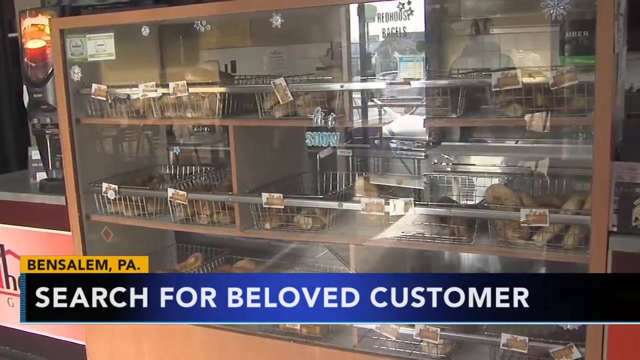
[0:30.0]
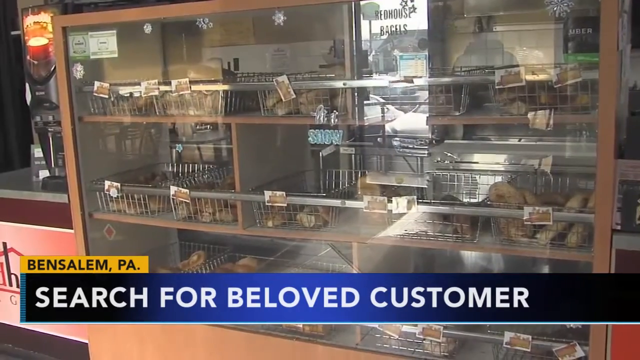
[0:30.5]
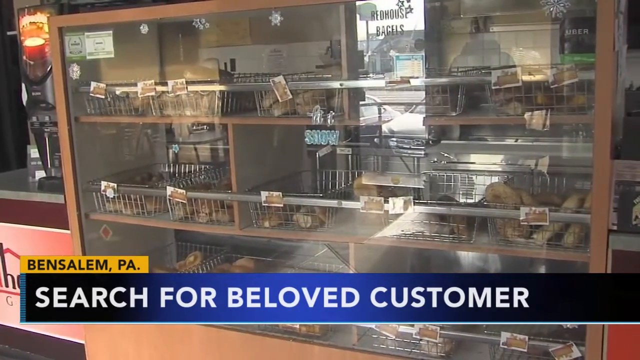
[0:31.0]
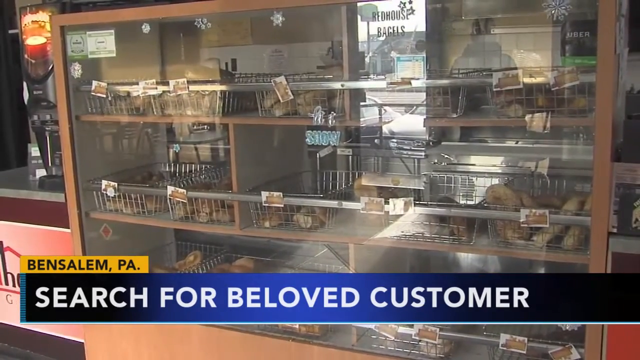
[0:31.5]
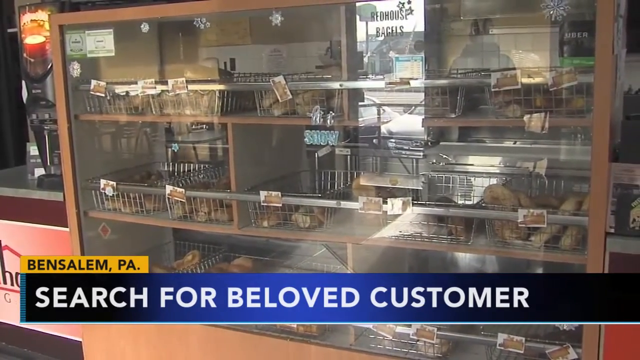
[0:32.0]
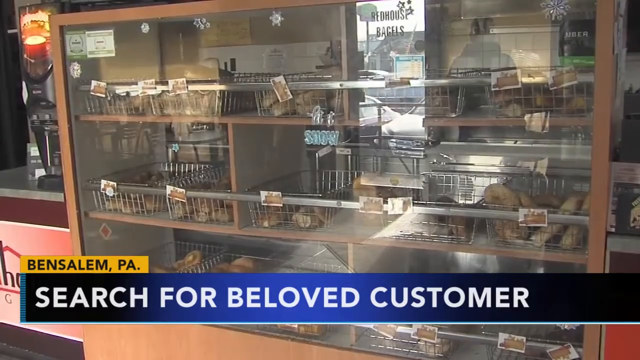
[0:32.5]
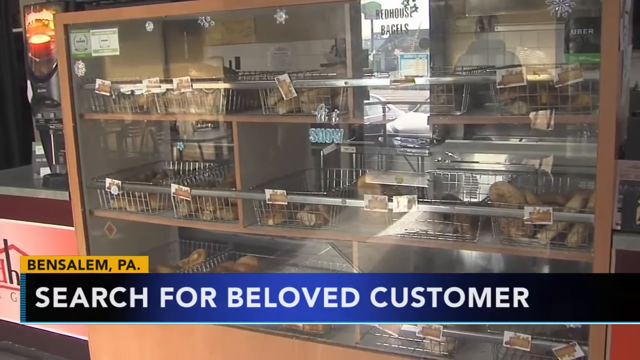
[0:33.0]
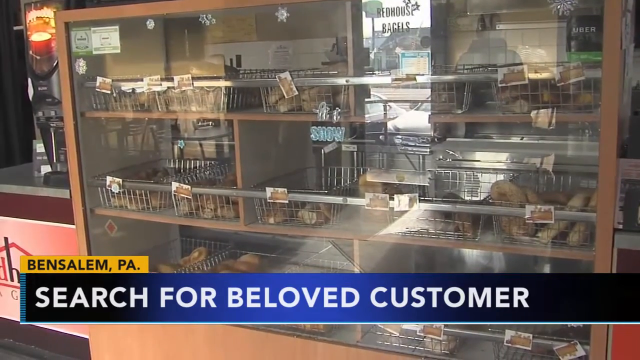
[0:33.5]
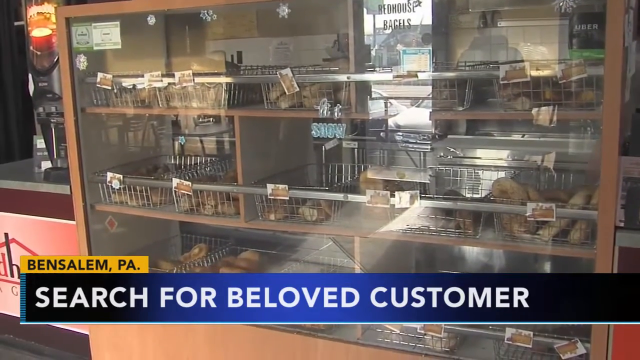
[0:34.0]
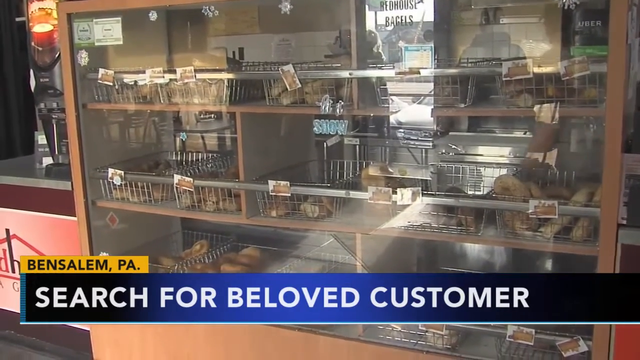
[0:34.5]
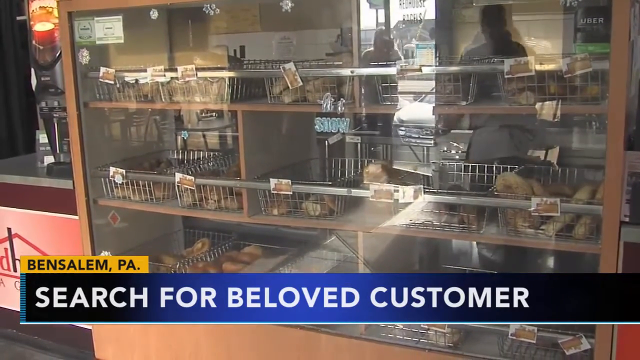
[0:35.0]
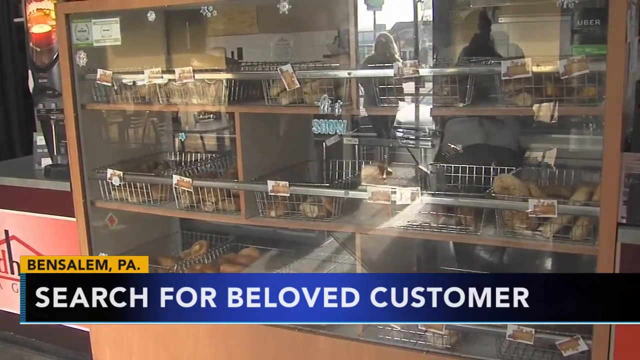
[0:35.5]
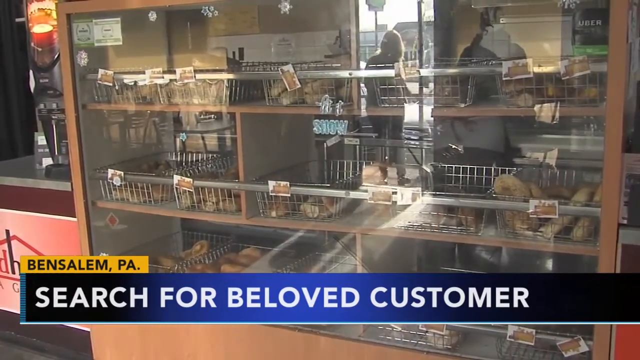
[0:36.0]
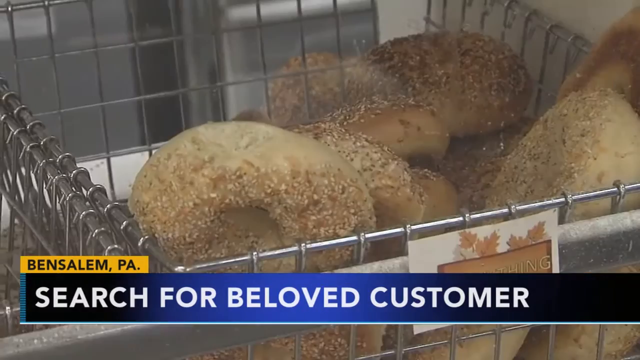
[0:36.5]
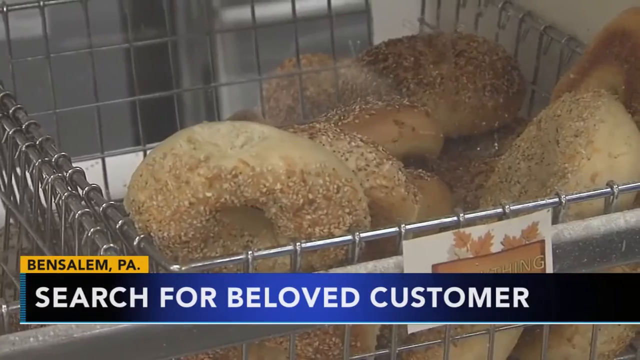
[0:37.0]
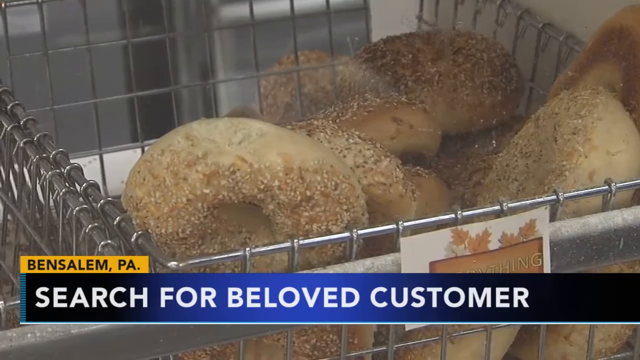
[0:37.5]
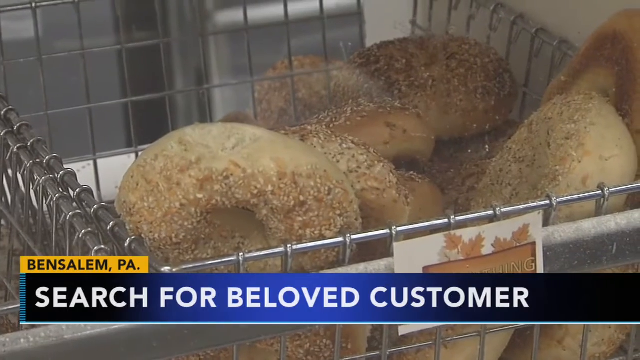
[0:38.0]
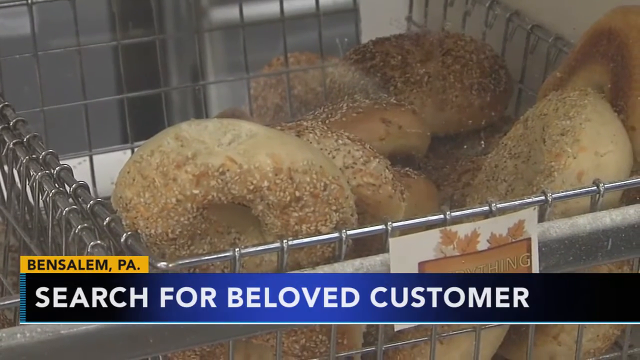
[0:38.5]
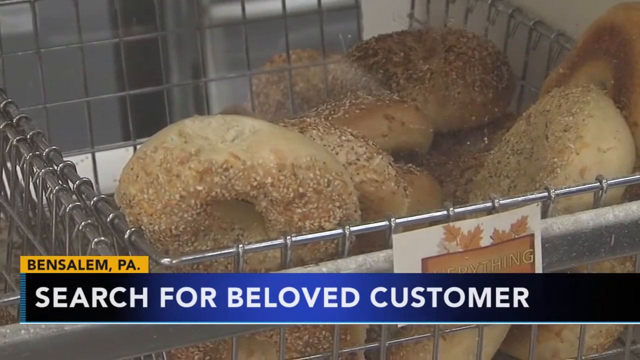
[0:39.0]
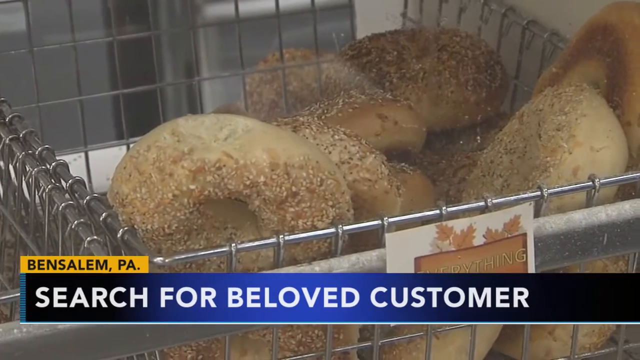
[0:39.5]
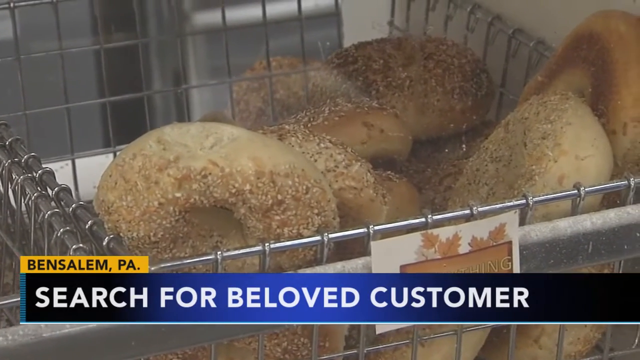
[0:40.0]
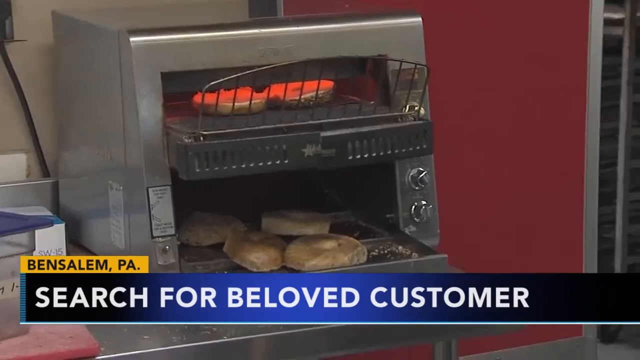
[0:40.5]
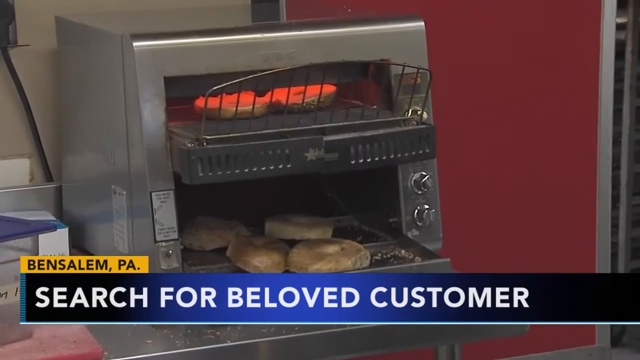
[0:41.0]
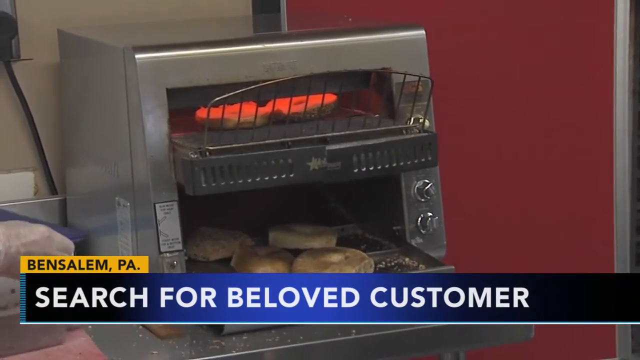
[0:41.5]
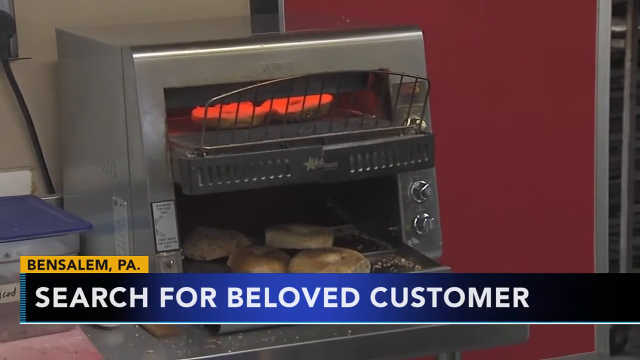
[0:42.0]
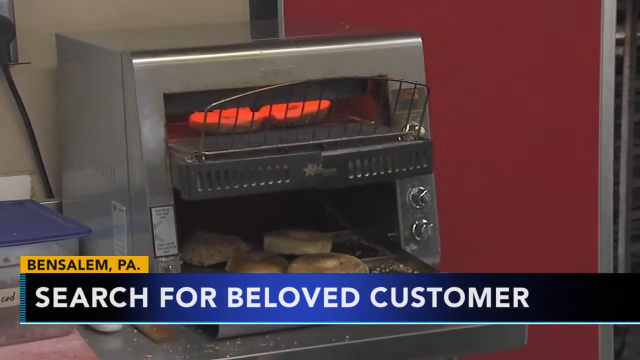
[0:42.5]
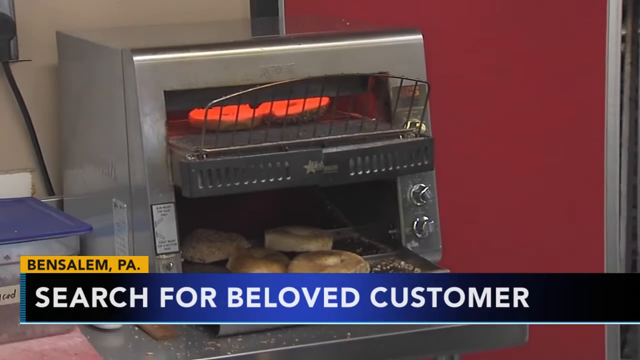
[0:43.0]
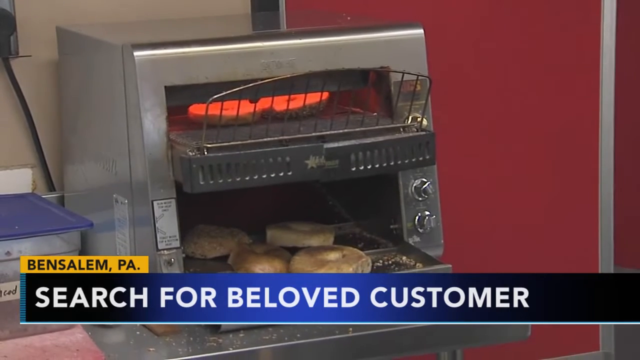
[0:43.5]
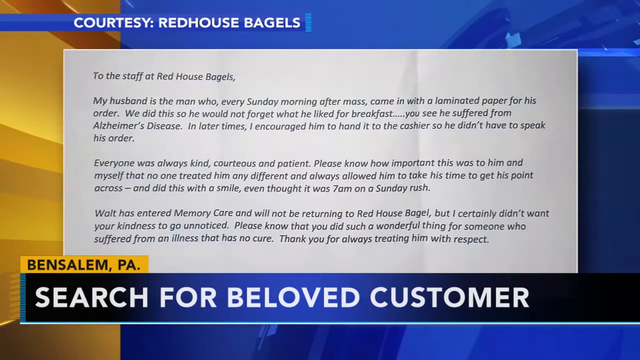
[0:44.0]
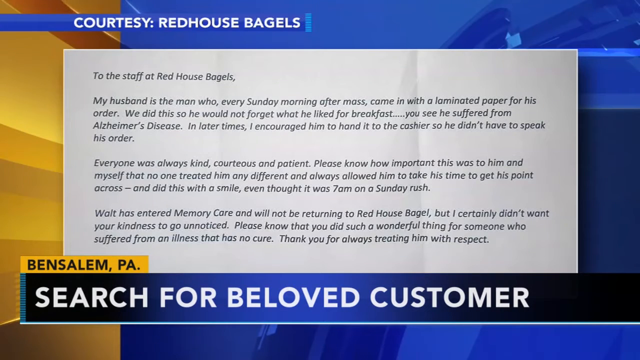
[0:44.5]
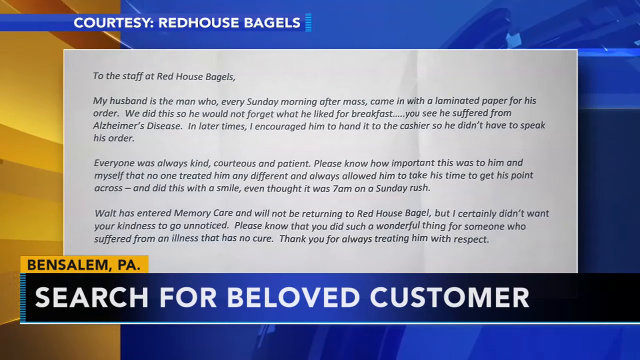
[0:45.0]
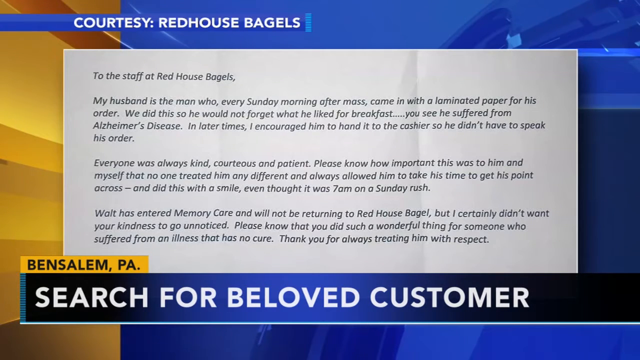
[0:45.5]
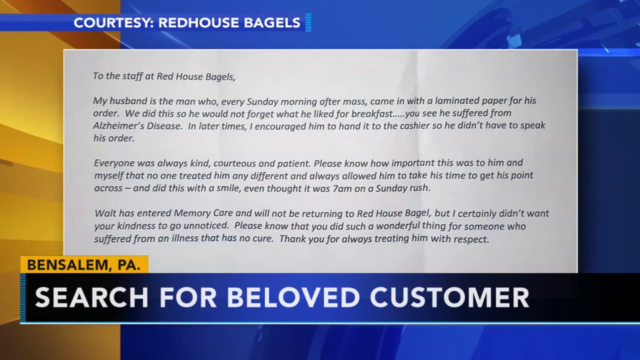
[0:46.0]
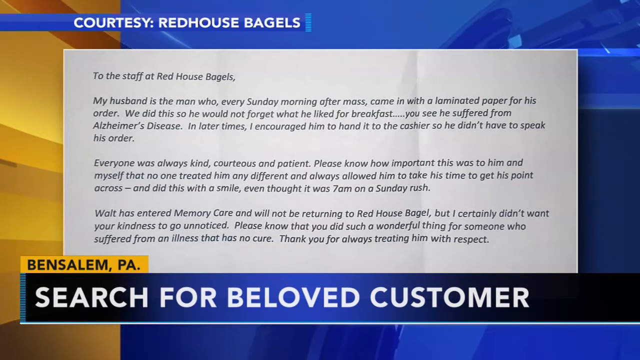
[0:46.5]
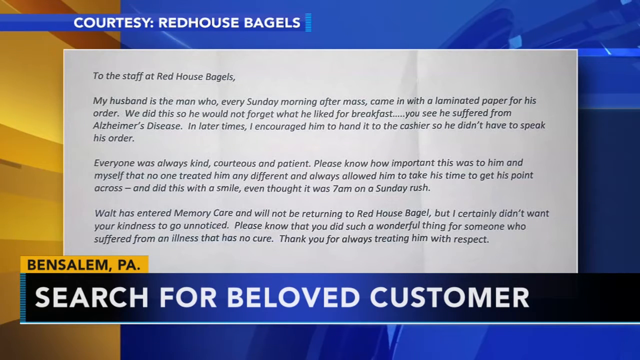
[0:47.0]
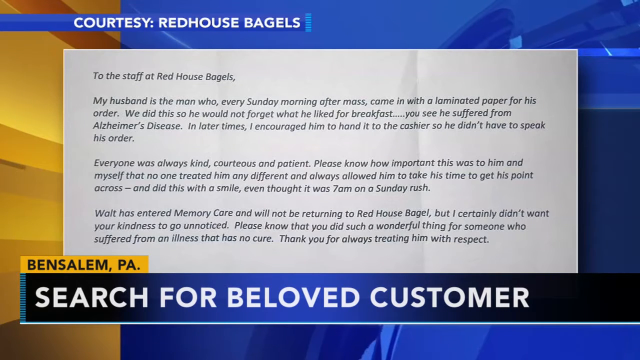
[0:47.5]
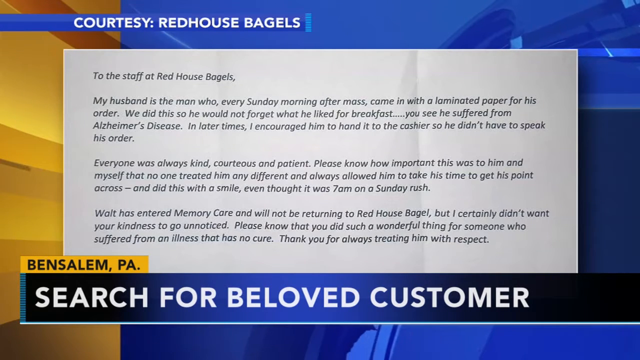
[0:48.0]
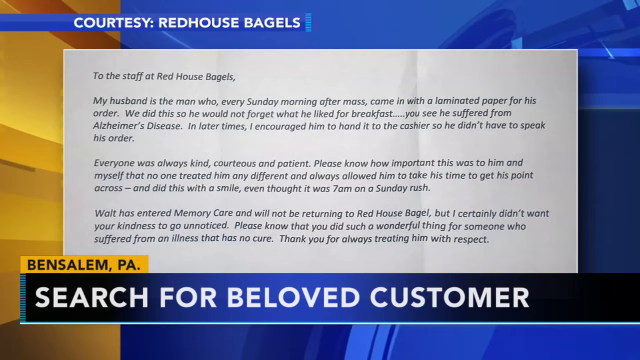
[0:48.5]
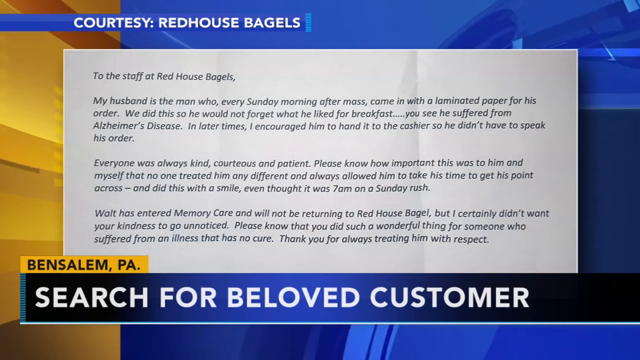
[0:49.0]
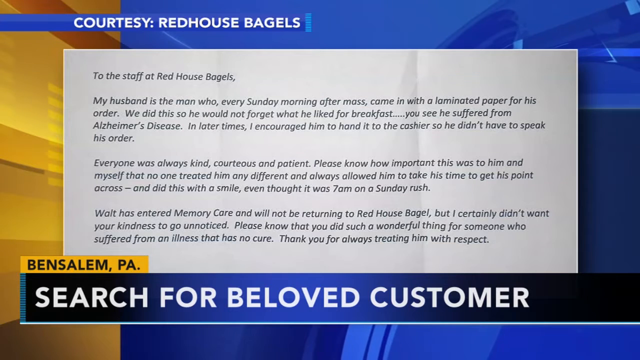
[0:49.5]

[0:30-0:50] Lots of bagels are inside what appear to be metal baskets behind a glass window, with a reflection on the glass. The caption at the bottom reads "Vansalem, Pennsylvania, search for beloved customer." In the reflection, a woman walks by and another woman walks into the business. A close-up then shows a metal basket with lots of bagels inside. Next comes what appears to be some type of stove or oven where the bagels are made, with about four bagels inside. Then a screenshot of a letter appears, titled "To the staff at Red House Bagels." The letter has about three paragraphs and comes from a wife writing about her husband having Alzheimer's disease and being a regular at the business.